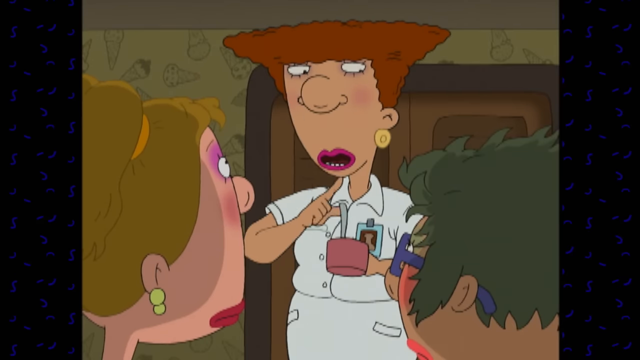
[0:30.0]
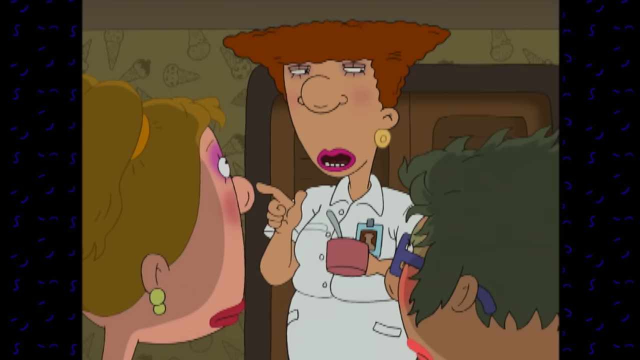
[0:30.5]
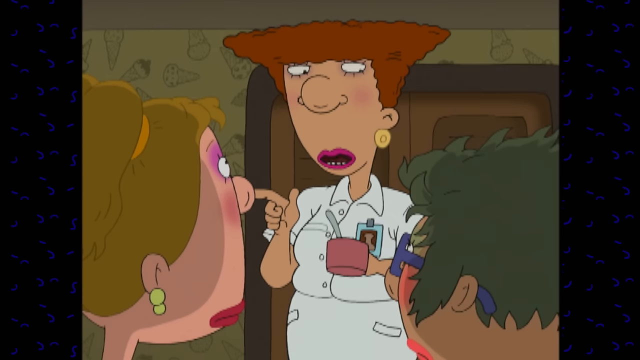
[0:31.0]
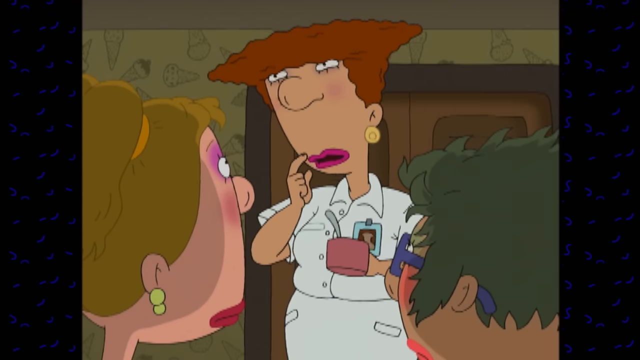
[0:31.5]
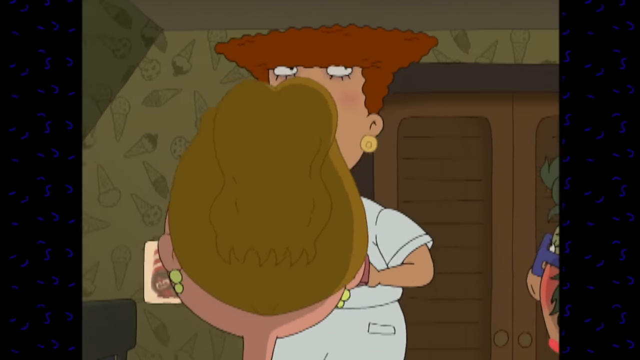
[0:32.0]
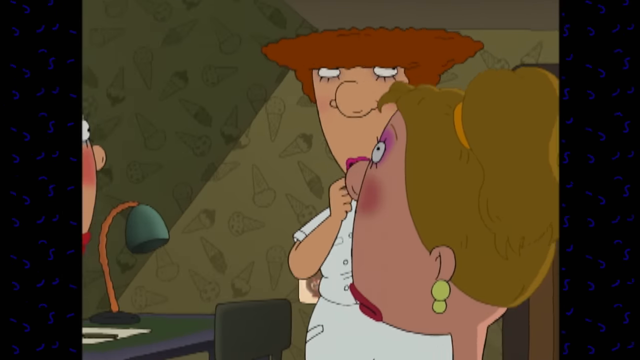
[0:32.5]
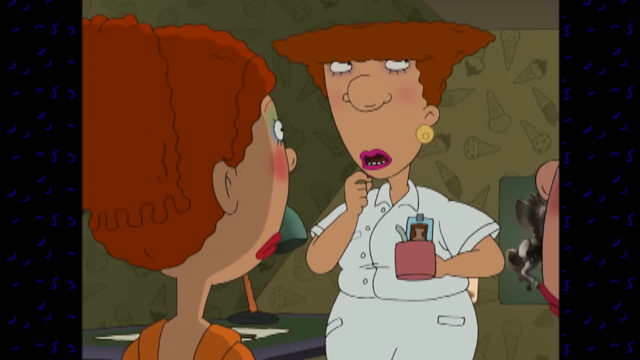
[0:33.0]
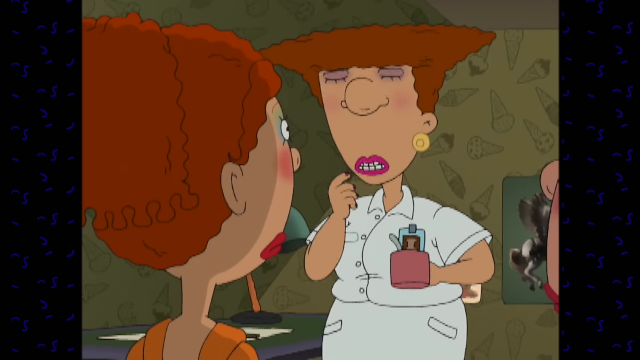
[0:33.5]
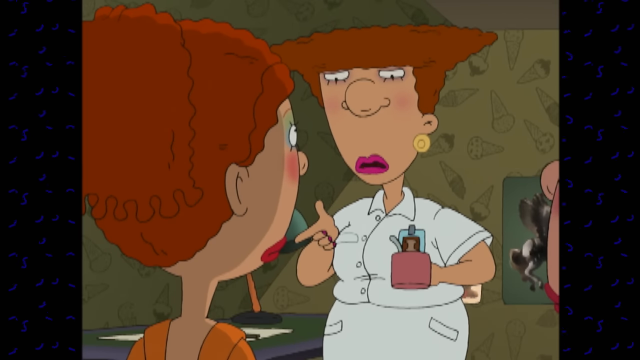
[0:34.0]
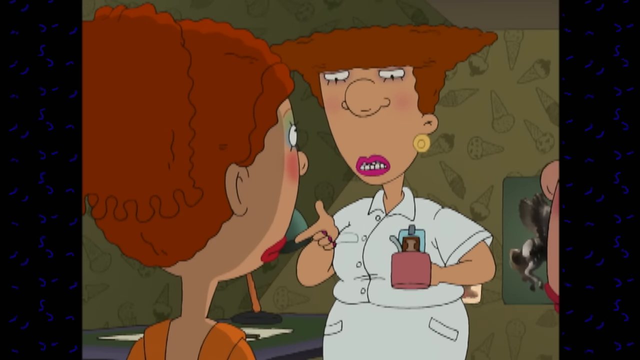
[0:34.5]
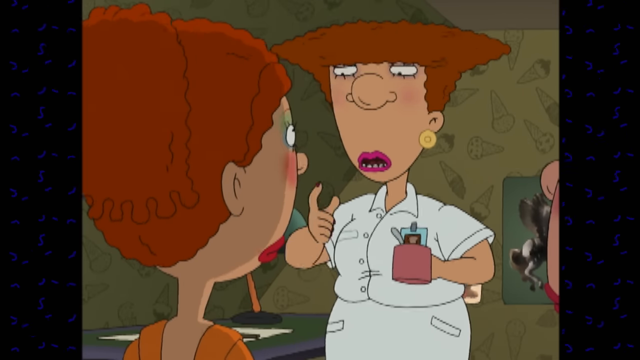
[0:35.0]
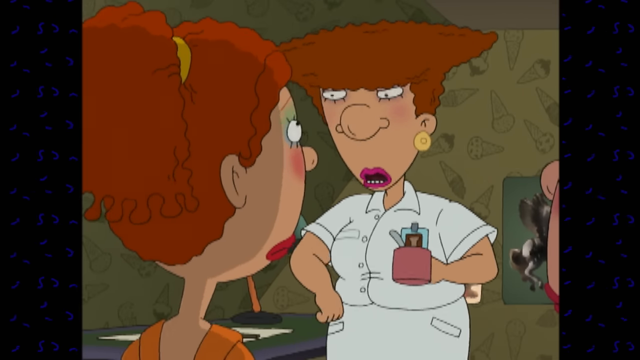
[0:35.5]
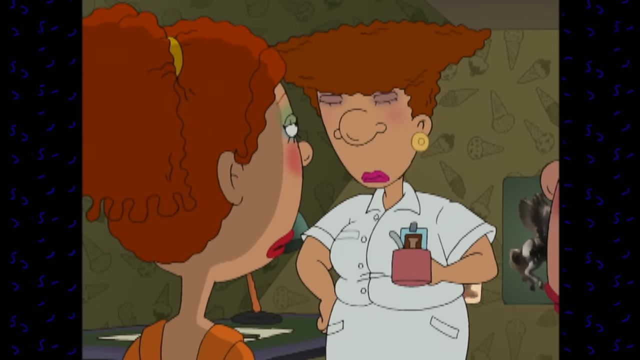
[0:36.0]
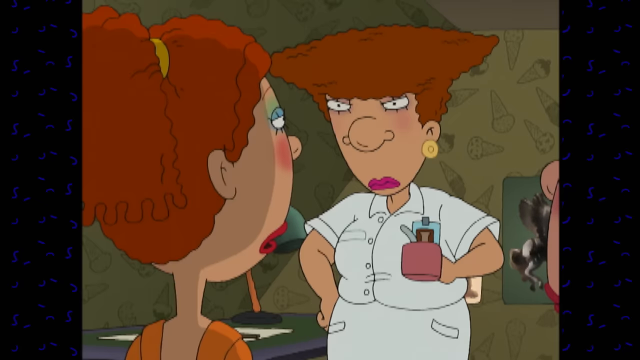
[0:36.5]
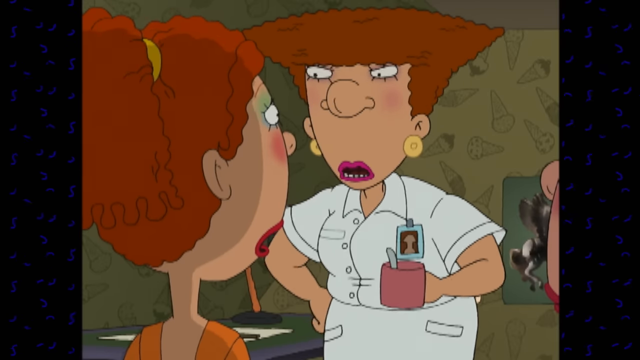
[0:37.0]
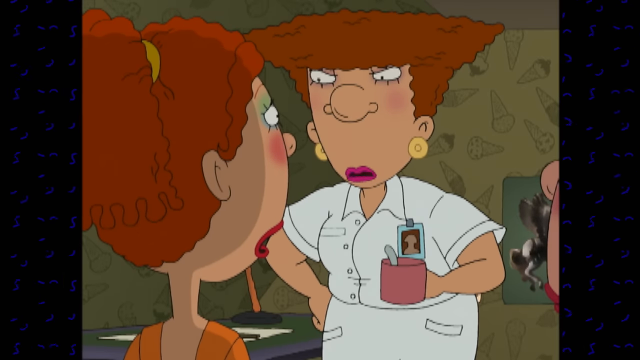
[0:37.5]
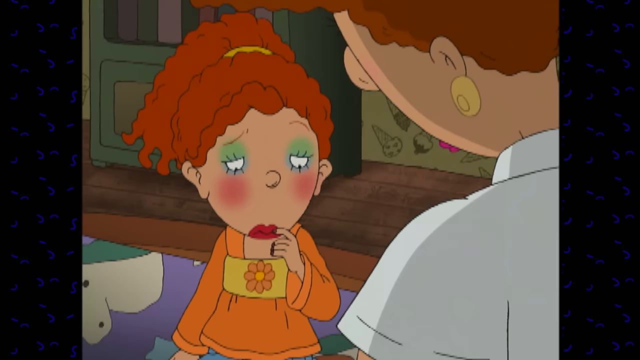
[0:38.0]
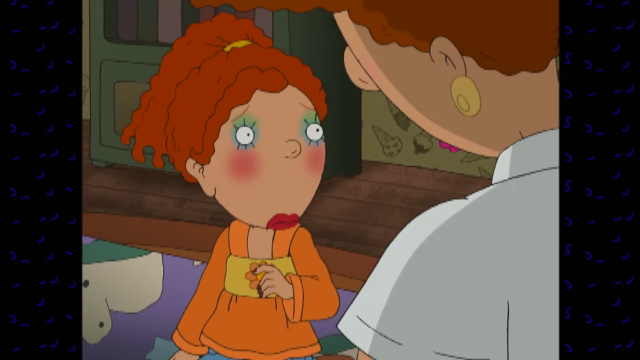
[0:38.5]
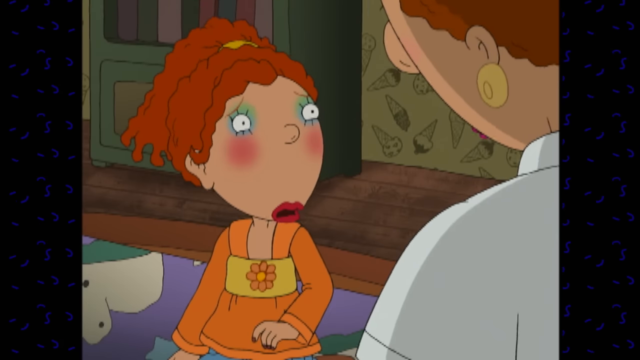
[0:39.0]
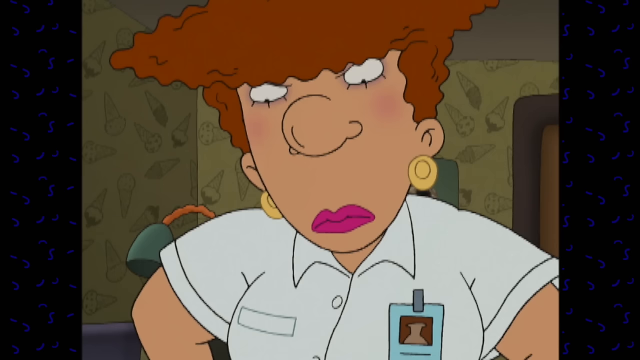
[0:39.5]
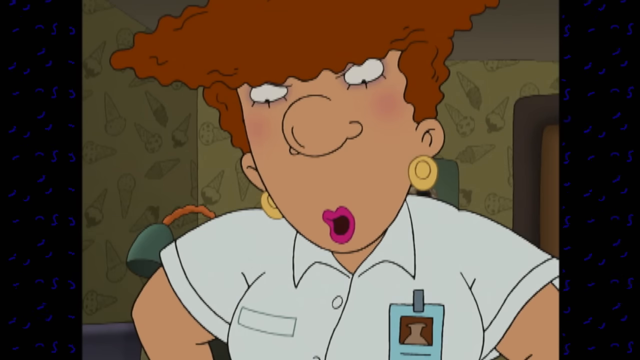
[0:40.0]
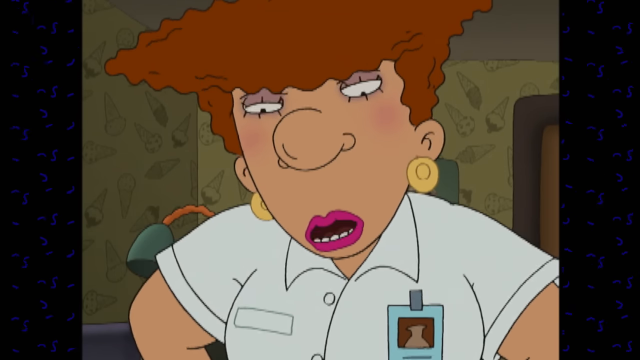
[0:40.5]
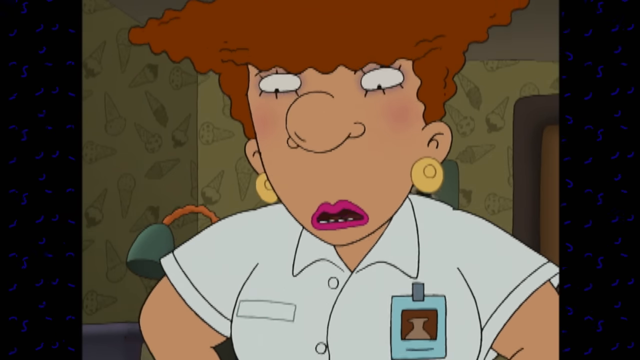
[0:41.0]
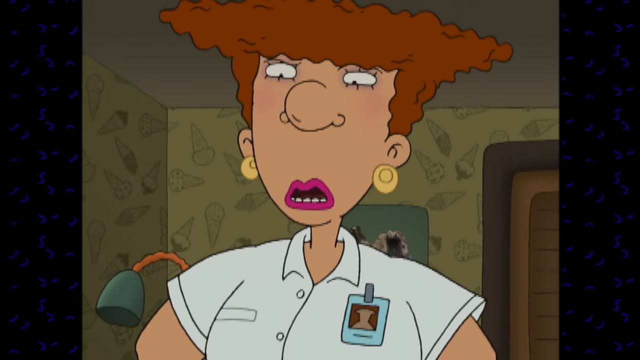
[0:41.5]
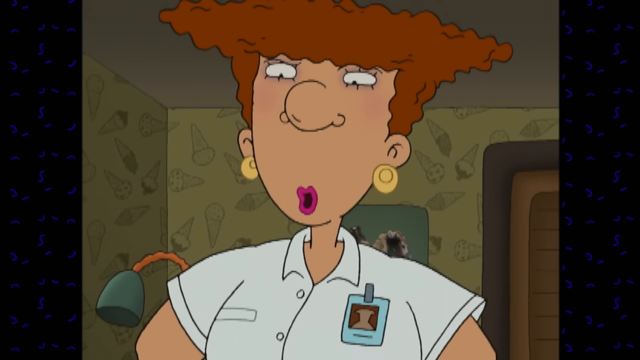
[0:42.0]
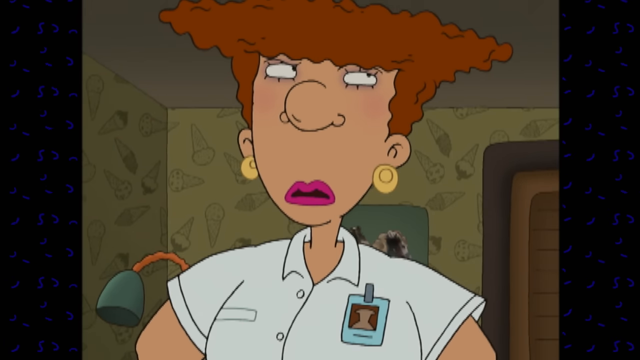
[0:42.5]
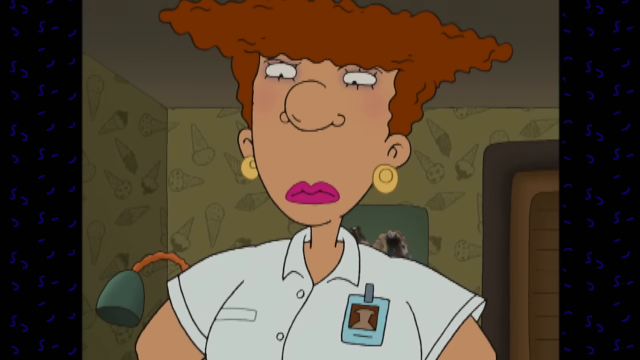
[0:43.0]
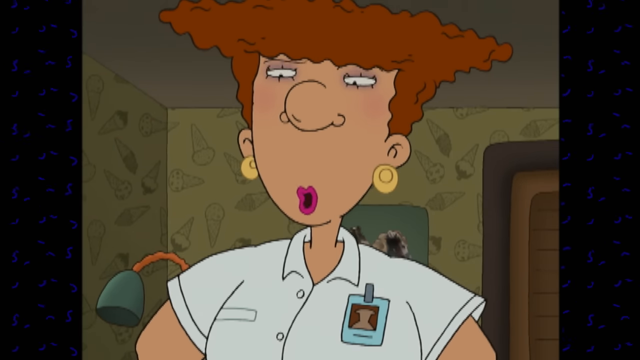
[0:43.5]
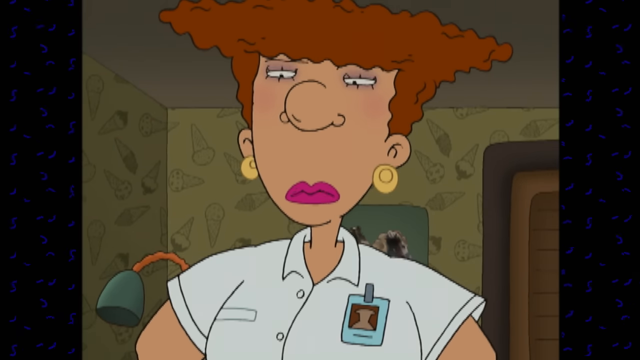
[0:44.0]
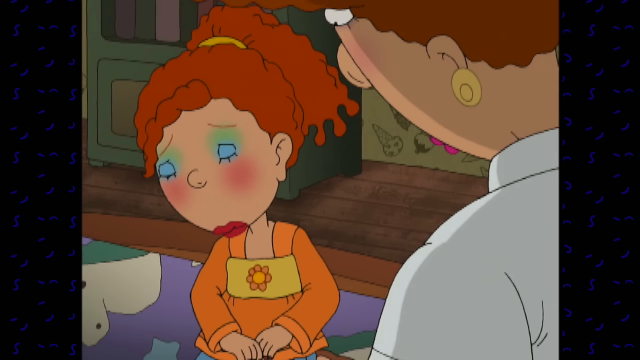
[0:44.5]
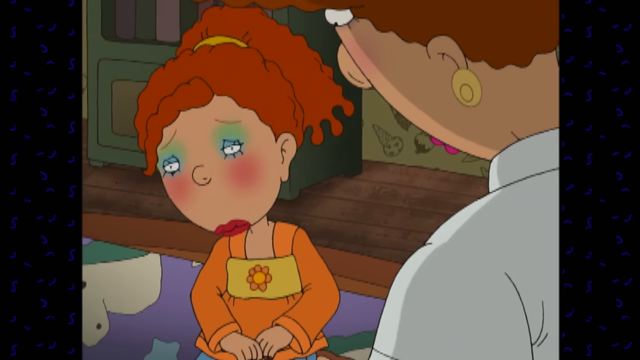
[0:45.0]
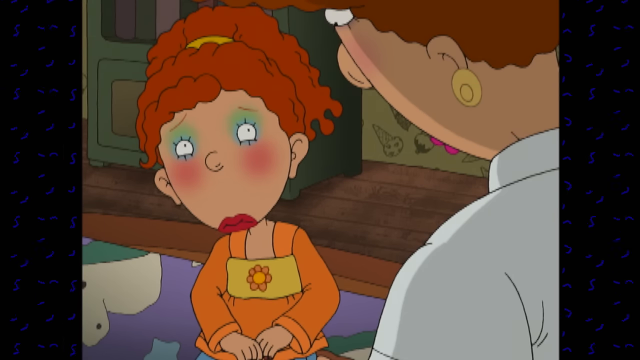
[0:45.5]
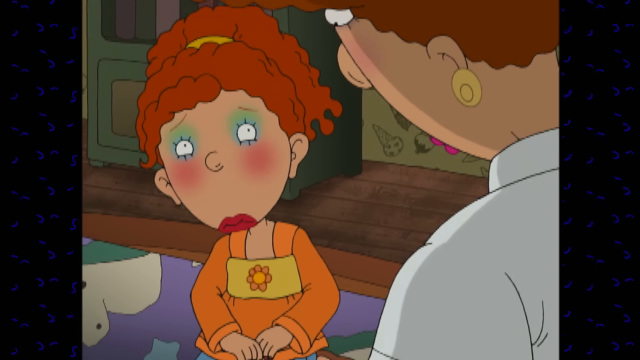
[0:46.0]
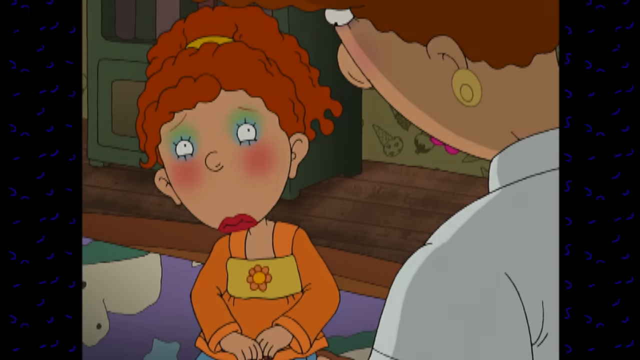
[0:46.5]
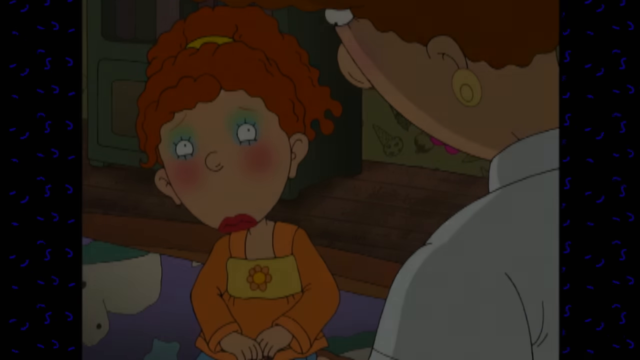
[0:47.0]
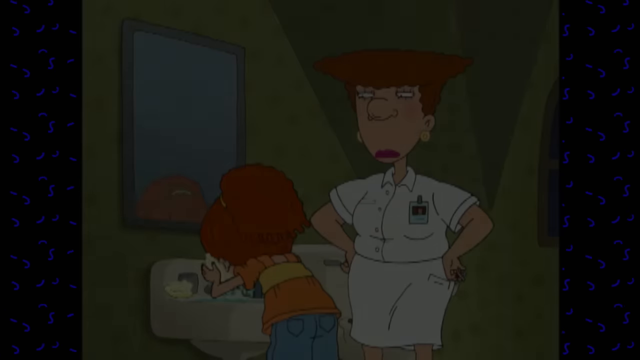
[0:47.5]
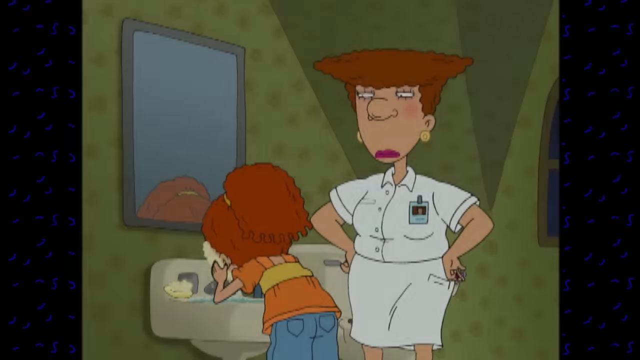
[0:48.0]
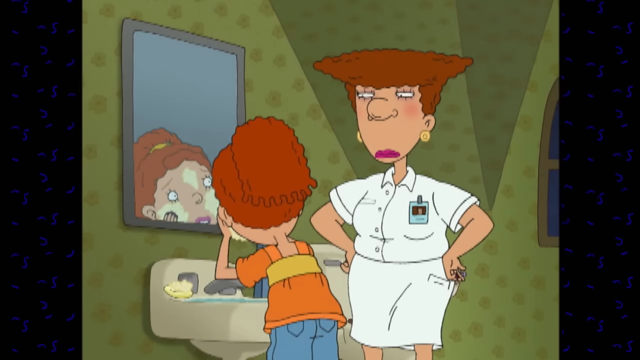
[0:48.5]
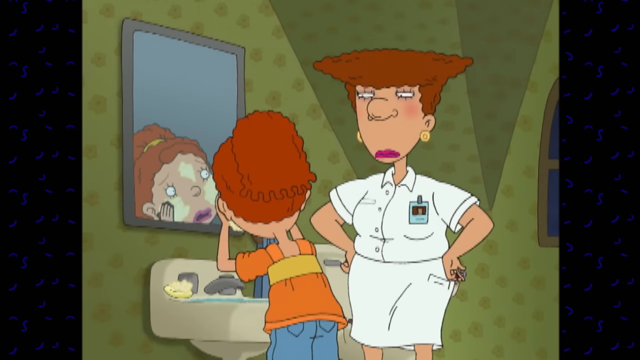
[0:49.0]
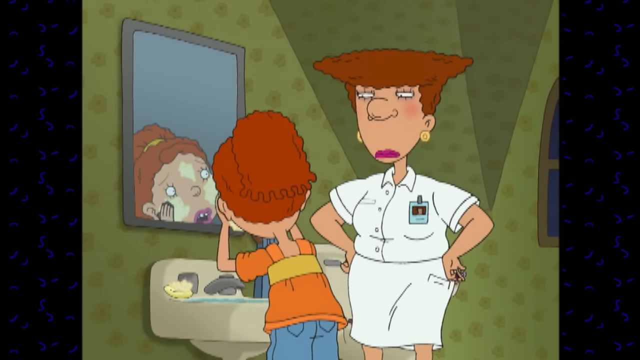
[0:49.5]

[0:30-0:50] The lady with the cup in her hand, who wears nice lipstick, is still talking to the kids, maybe telling one of the girls she has done something wrong. The girl with red hair, who wears orange pyjamas, looks really sad after the lady in the white coat, who looks like a nurse, tells her something she doesn't like. Afterward the girl goes to the bathroom to wash her face, and the lady goes with her, maybe to see if she is doing everything right. The girl washes her face with soap and water, is not so sad anymore, and does what she was told.